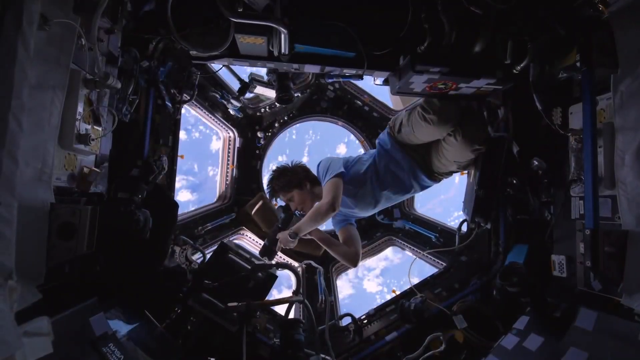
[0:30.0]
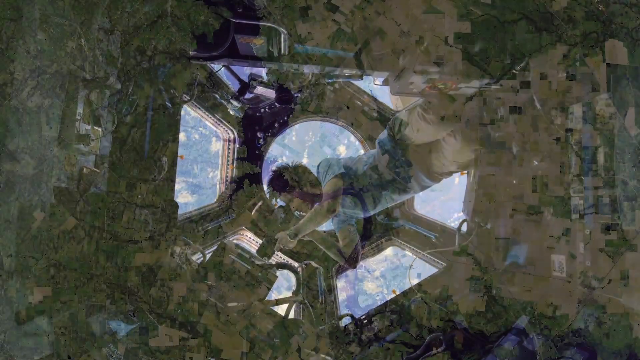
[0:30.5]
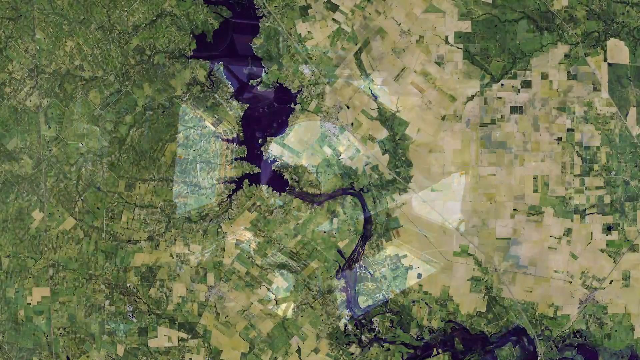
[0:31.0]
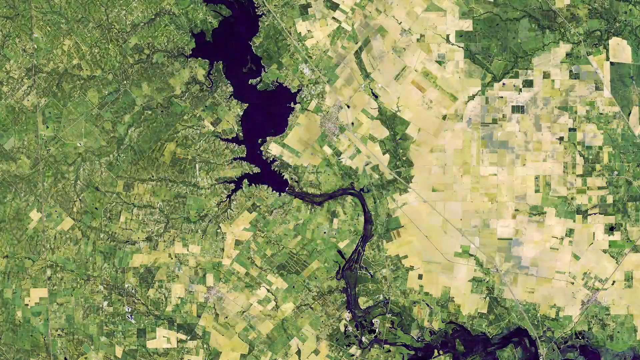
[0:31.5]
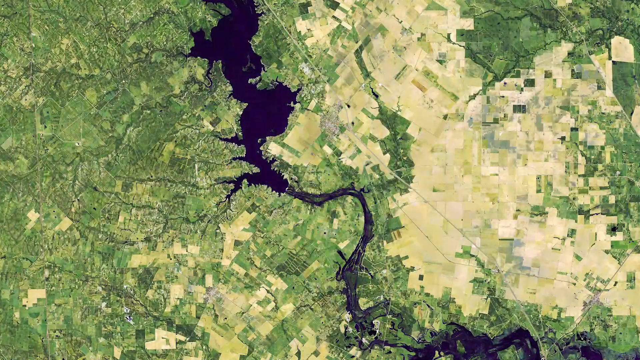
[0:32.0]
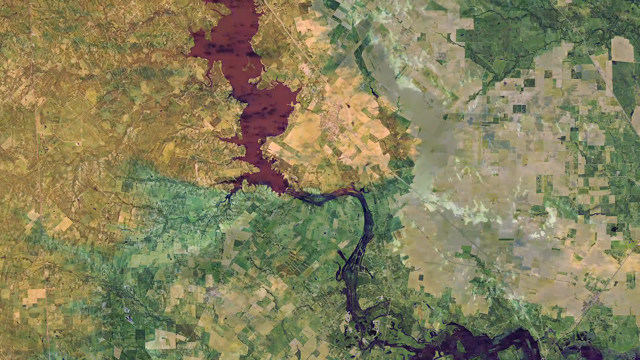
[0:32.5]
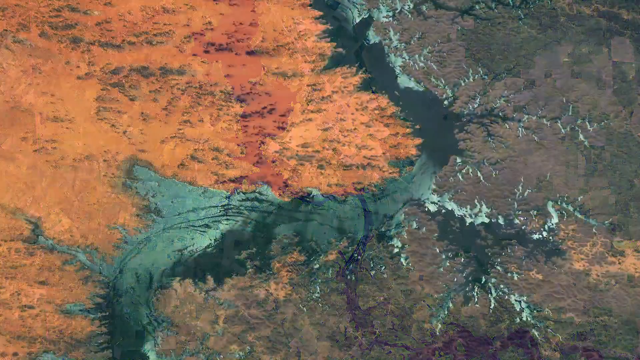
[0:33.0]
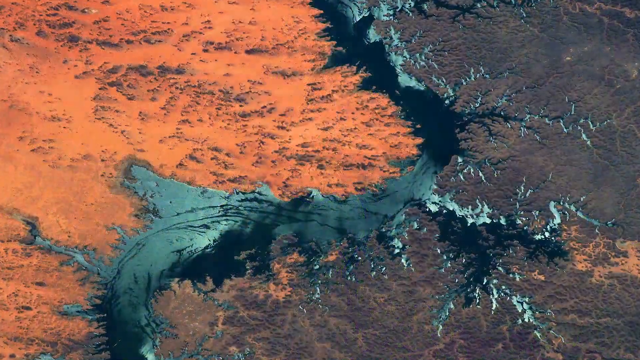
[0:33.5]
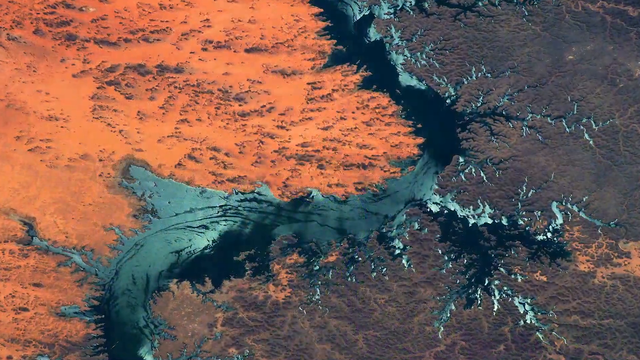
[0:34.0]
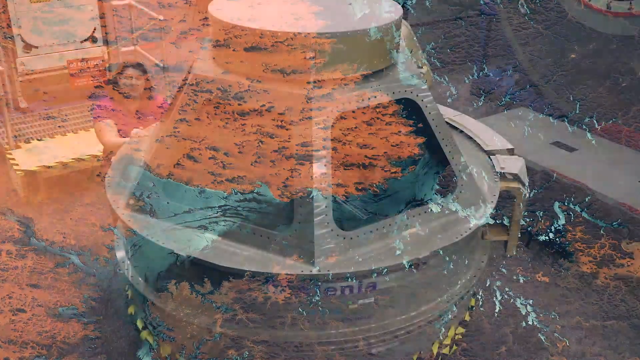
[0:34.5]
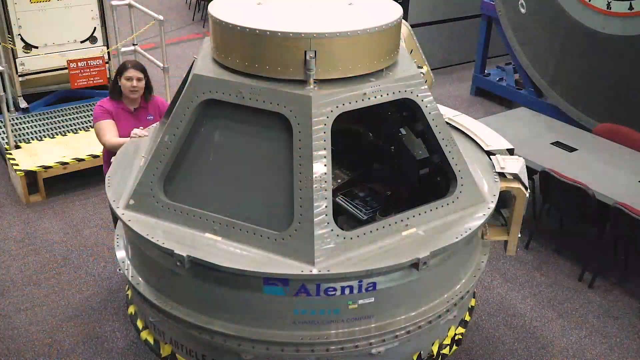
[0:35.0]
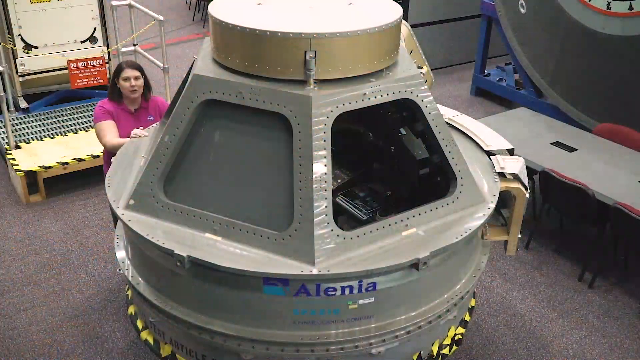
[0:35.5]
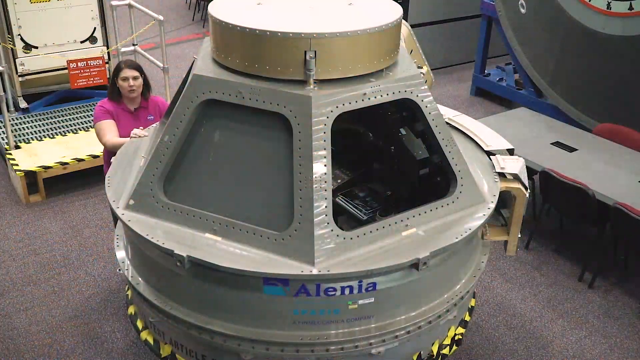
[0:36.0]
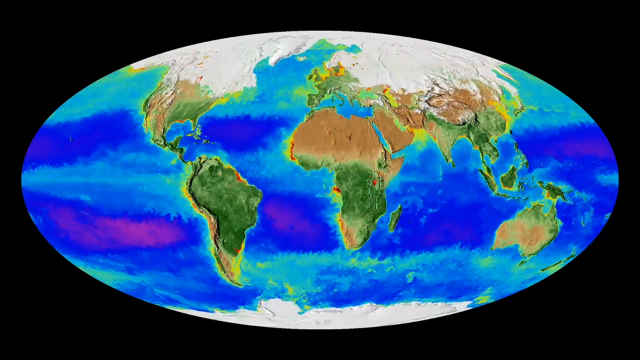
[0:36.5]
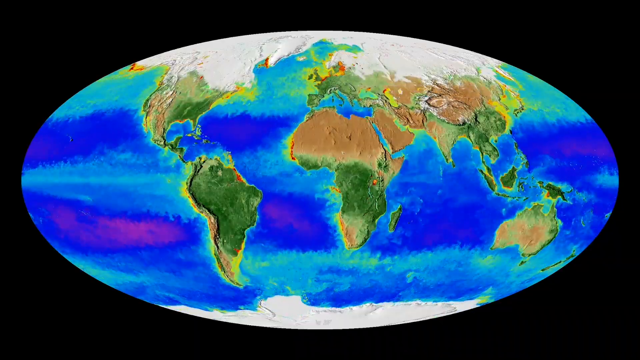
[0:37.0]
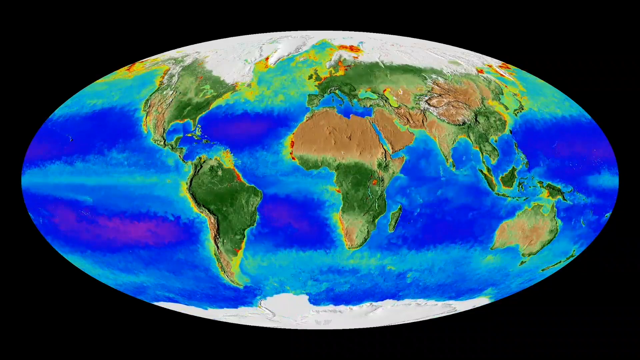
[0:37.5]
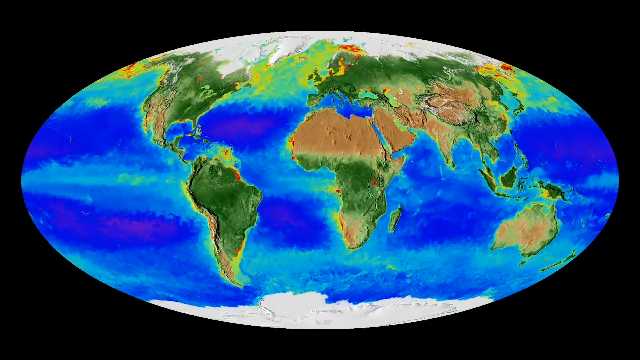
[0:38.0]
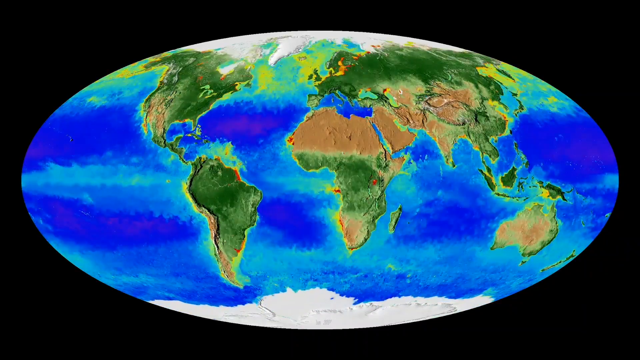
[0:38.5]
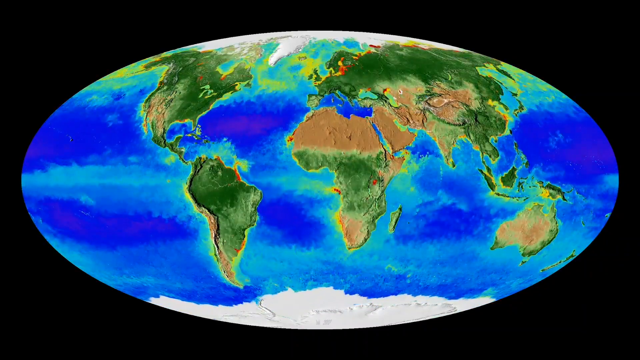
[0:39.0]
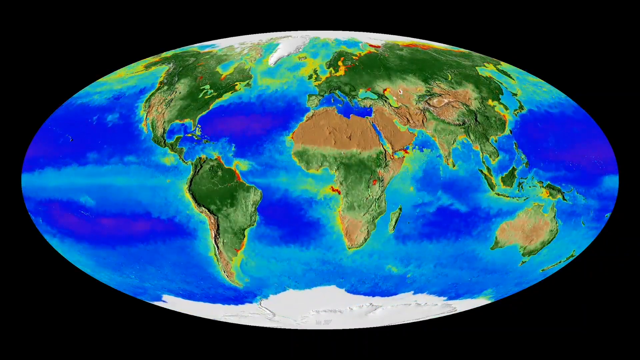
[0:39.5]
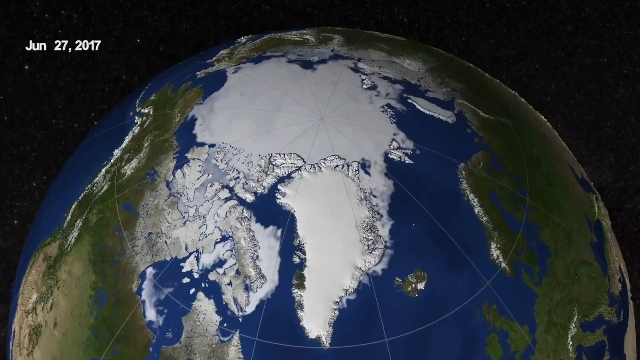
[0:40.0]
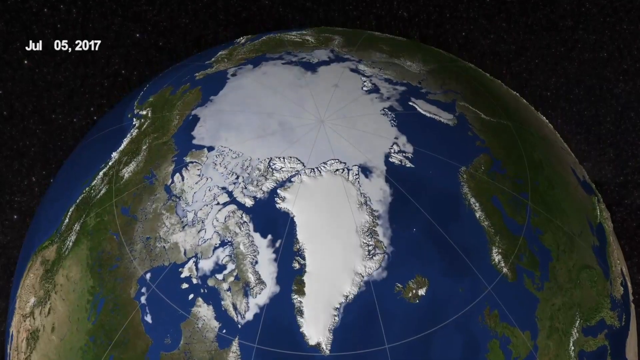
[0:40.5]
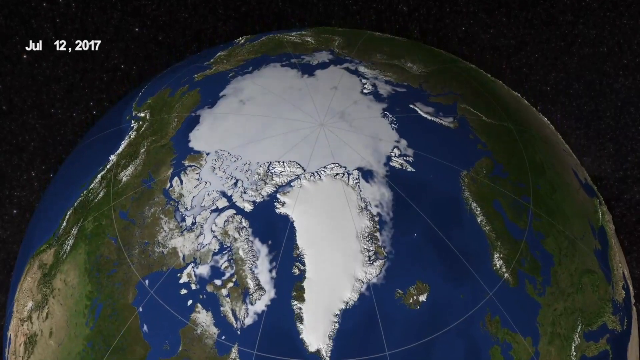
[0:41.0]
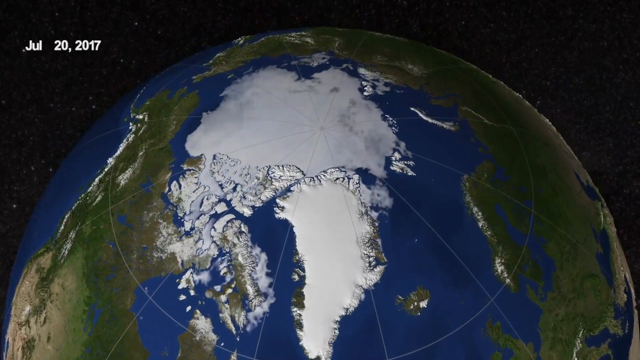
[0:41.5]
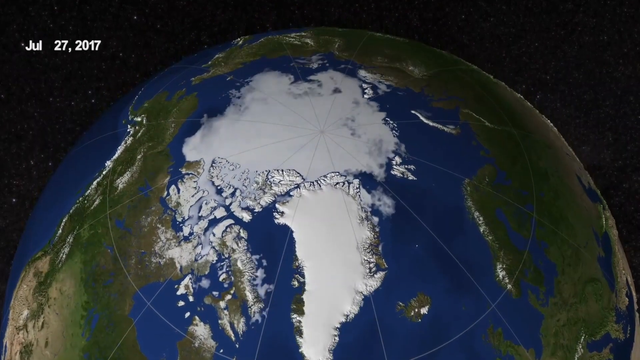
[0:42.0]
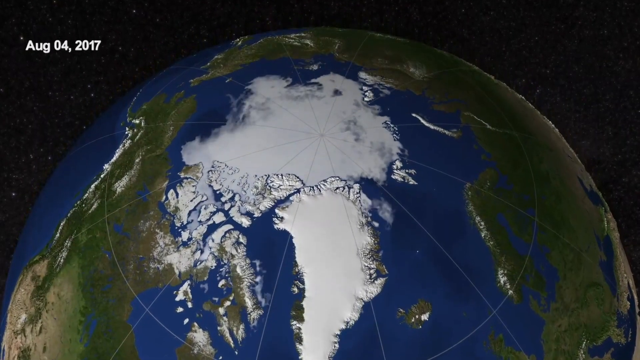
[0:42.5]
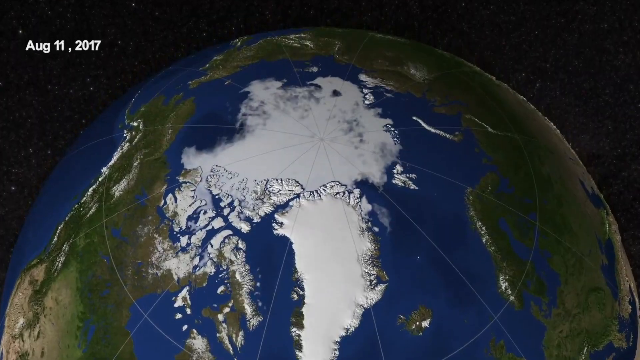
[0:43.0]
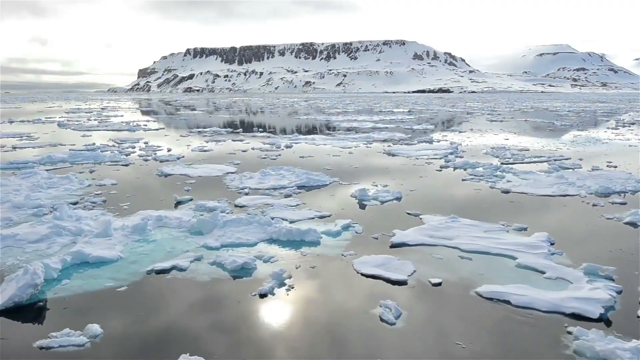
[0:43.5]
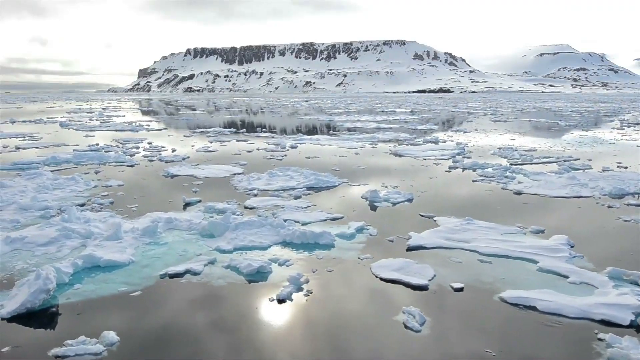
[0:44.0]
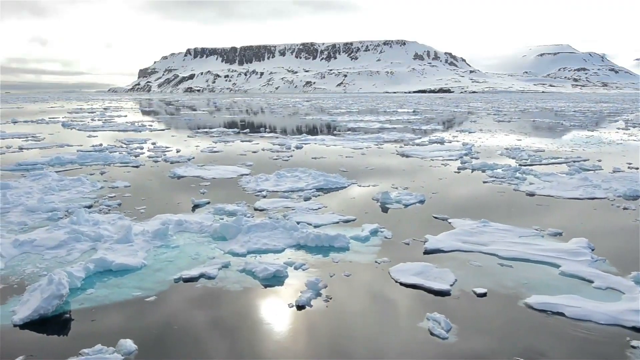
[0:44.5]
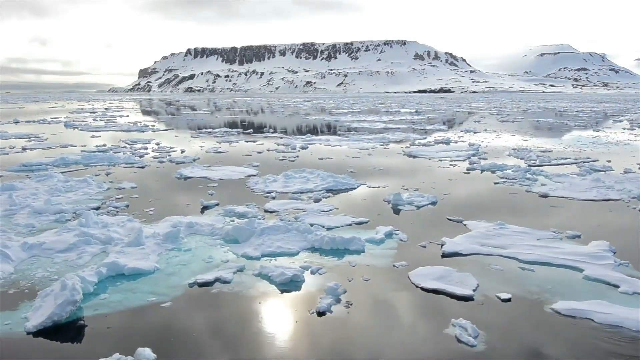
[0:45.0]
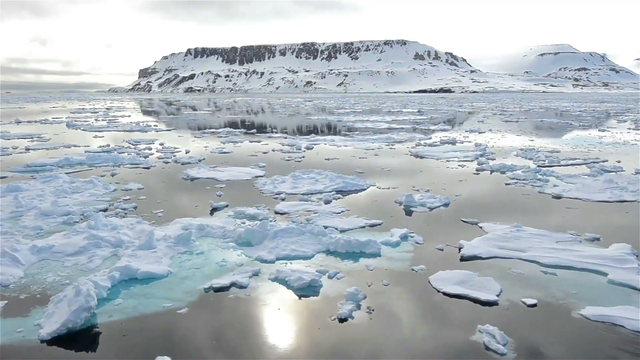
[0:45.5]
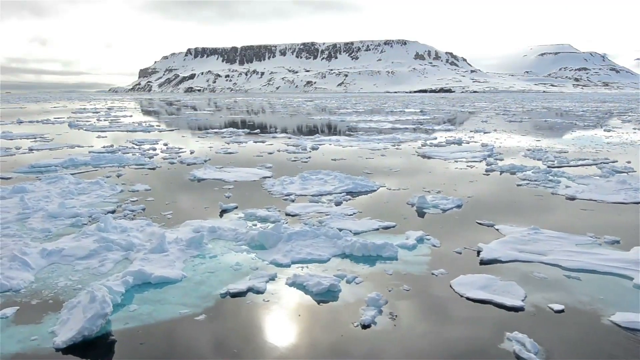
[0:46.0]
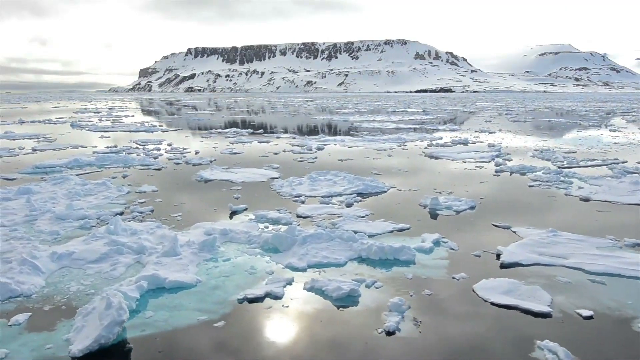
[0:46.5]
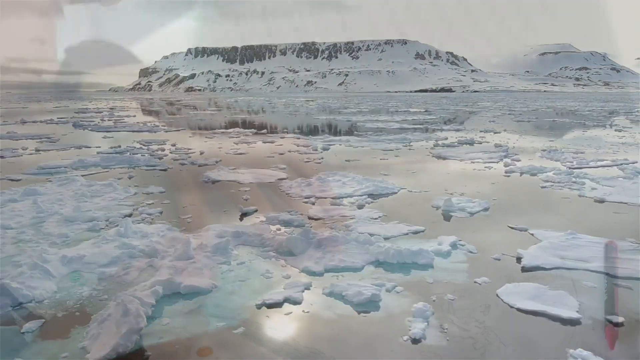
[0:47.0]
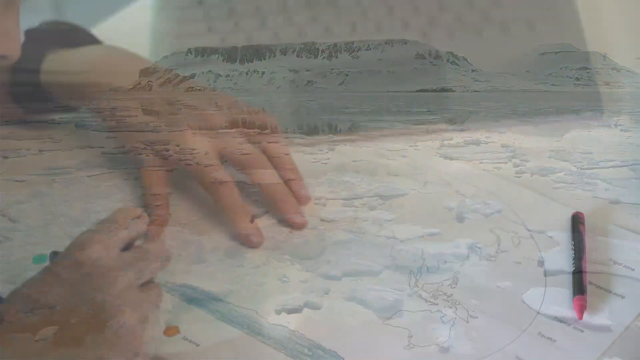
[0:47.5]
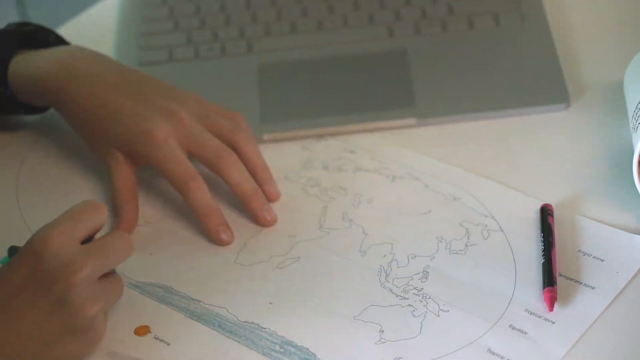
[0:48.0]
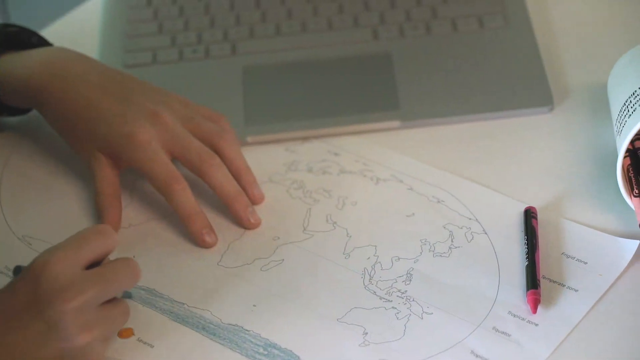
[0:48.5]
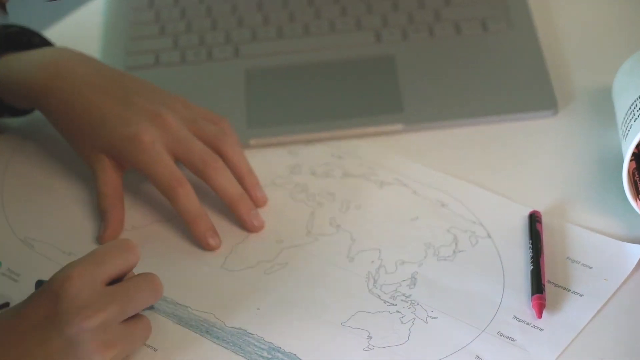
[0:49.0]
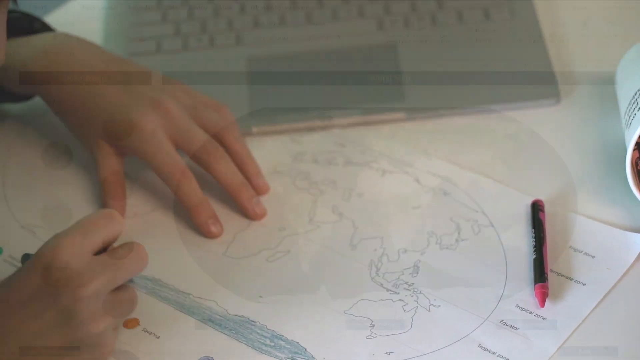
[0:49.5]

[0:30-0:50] A Caucasian woman with short hair, an astronaut wearing khaki pants and a blue shirt, is at the window taking video of the world. An overview of the world follows, made up of several different pictures. A Caucasian woman around 30 years old is outside of a capsule, speaking. A map version of the Earth appears, with the land in green, the waters in blue, and the polar ice caps visible; as it goes on, some of the white polar ice caps turn a greenish color. The date "July 28, 2017" appears, there is a focus on a globe, and the view pans to show several polar ice caps. A woman then appears to be making a map of the world.